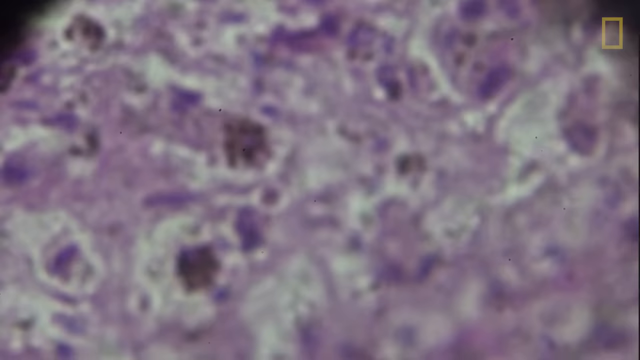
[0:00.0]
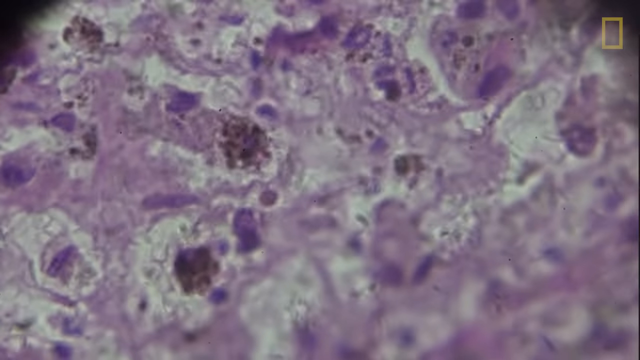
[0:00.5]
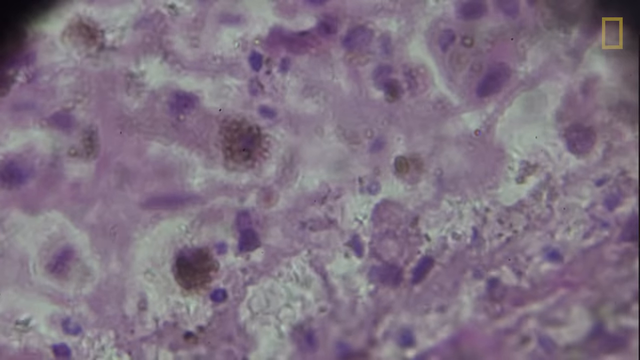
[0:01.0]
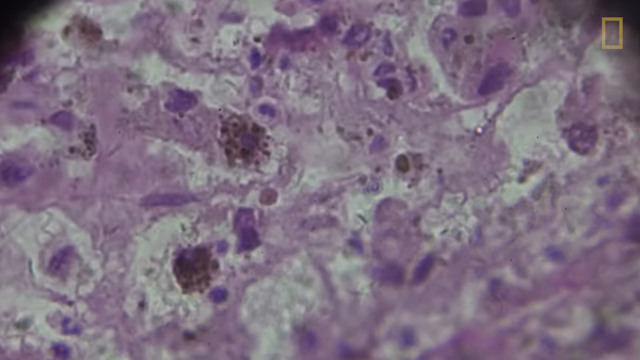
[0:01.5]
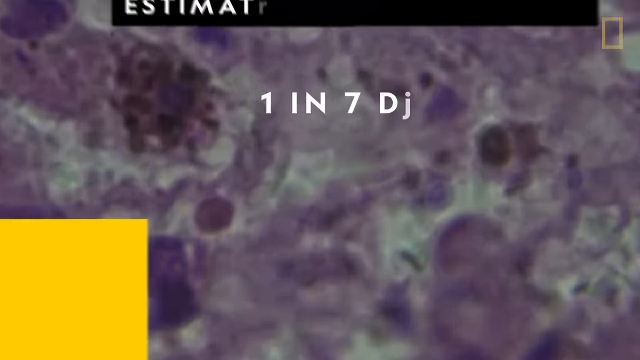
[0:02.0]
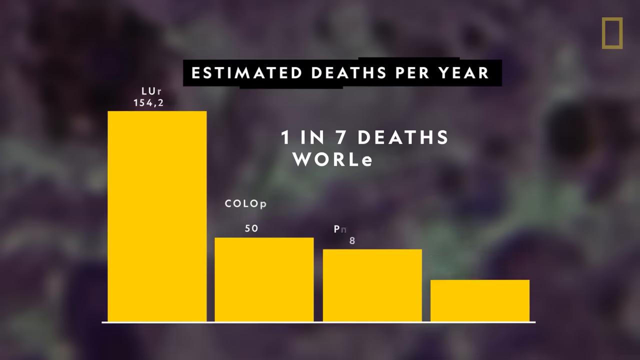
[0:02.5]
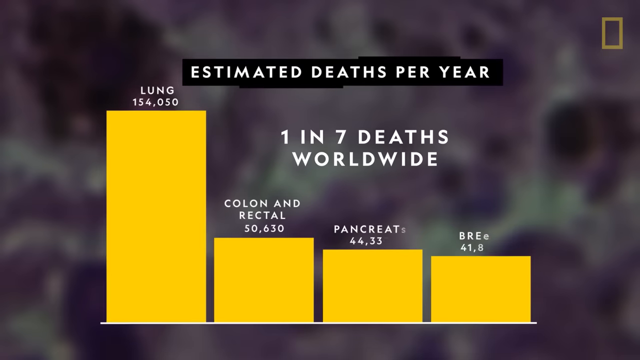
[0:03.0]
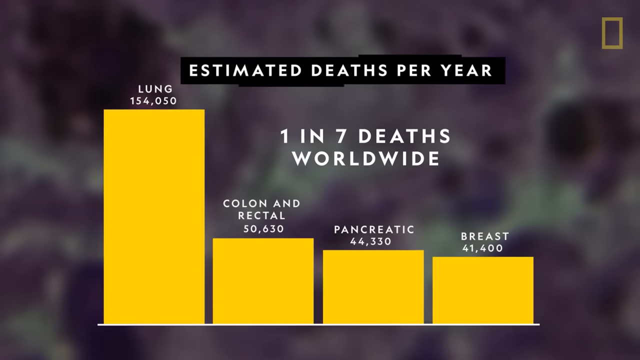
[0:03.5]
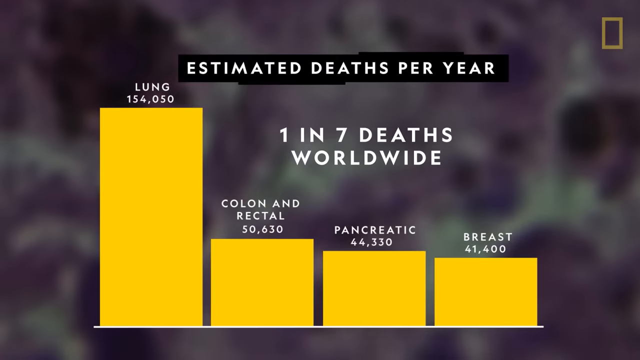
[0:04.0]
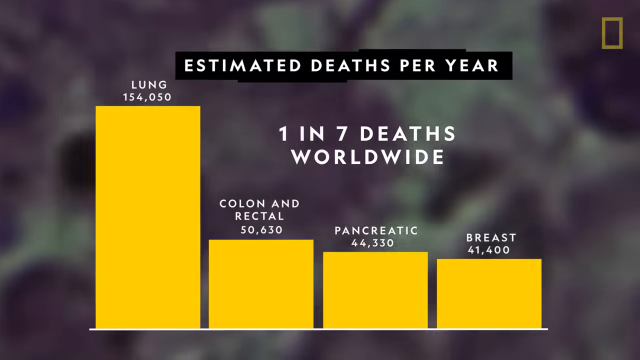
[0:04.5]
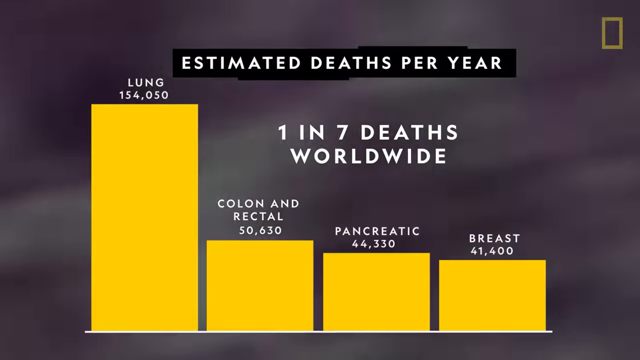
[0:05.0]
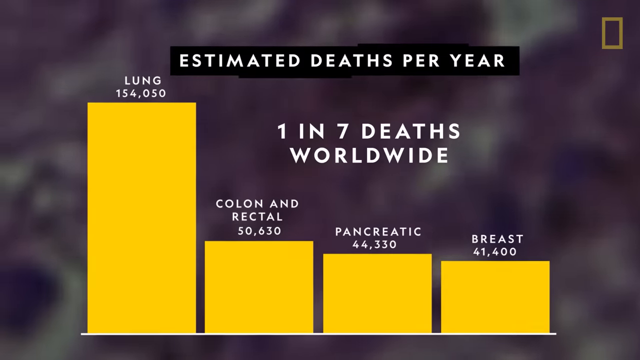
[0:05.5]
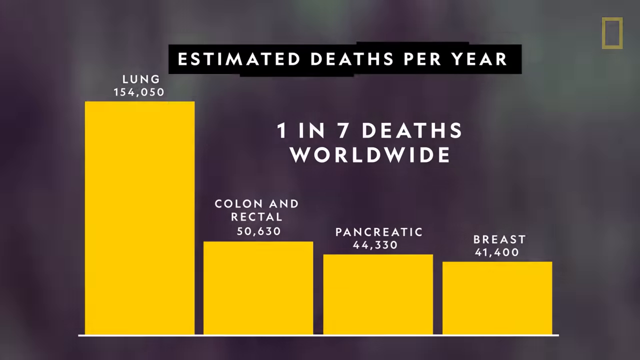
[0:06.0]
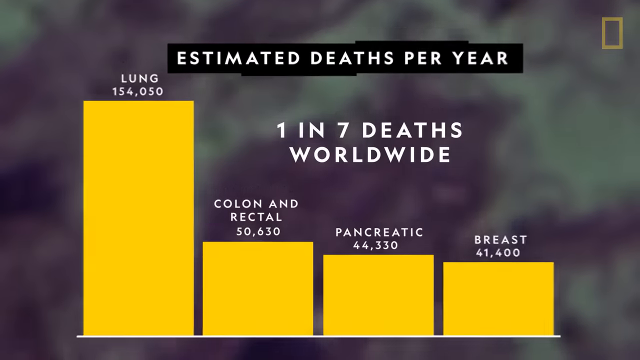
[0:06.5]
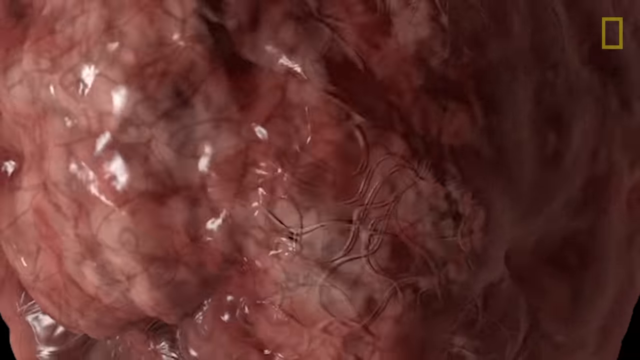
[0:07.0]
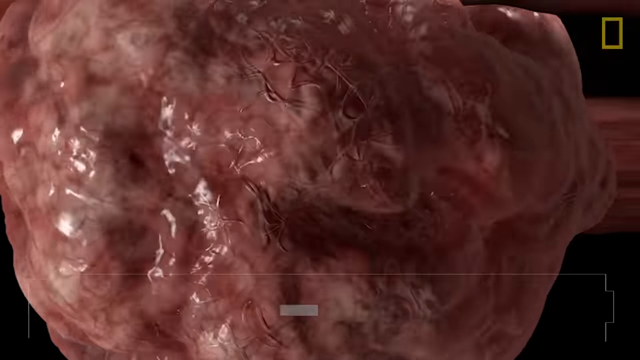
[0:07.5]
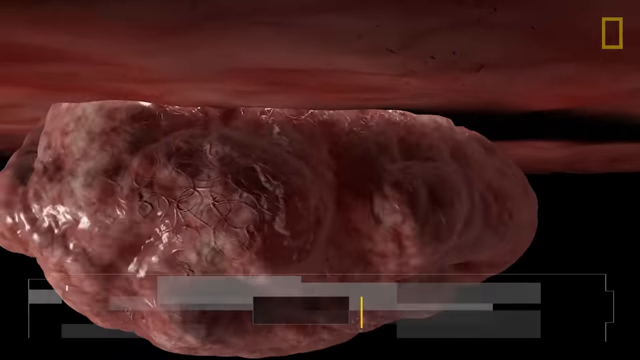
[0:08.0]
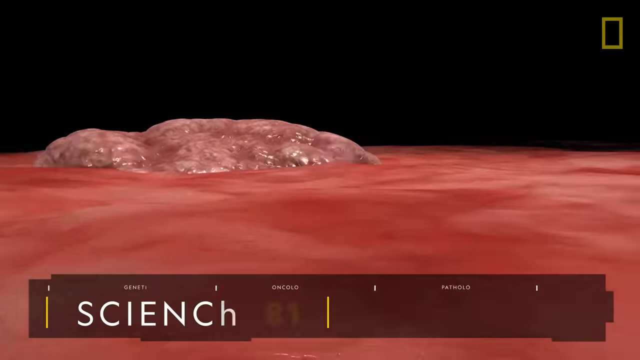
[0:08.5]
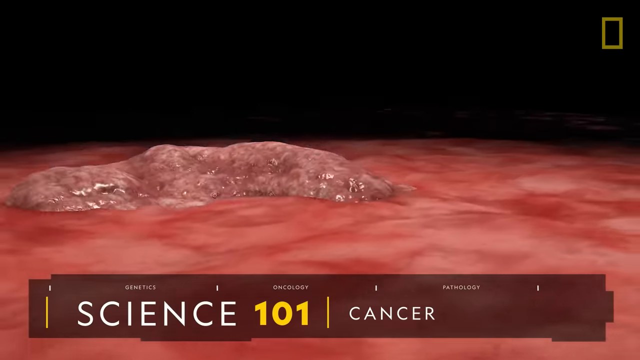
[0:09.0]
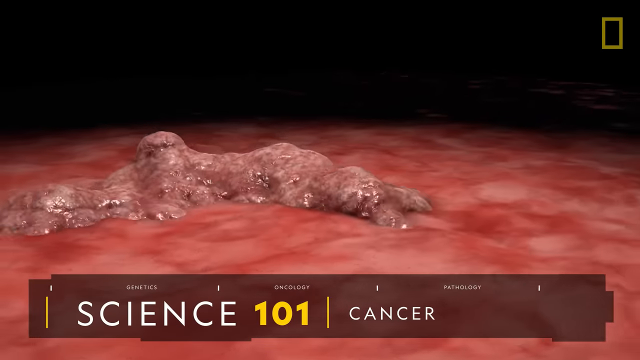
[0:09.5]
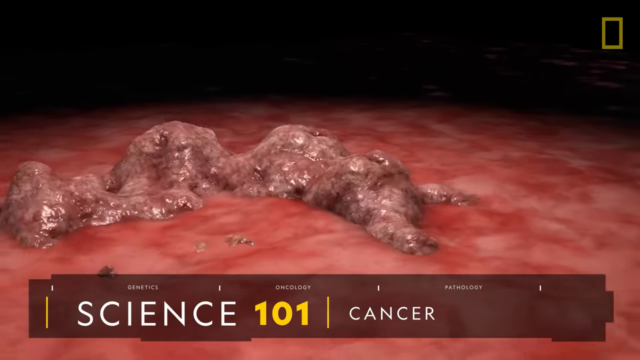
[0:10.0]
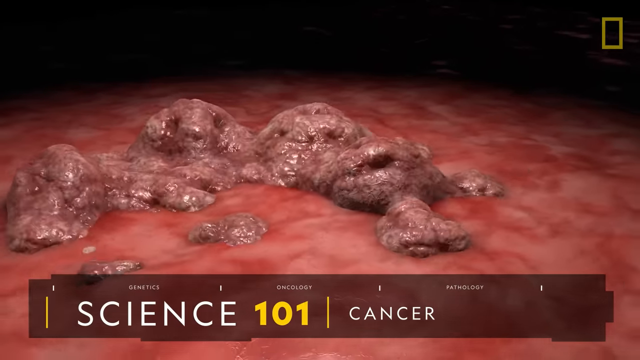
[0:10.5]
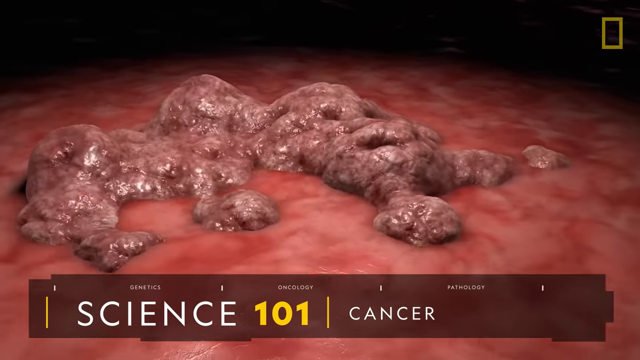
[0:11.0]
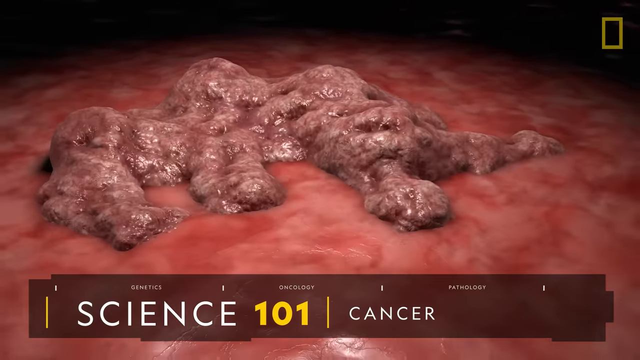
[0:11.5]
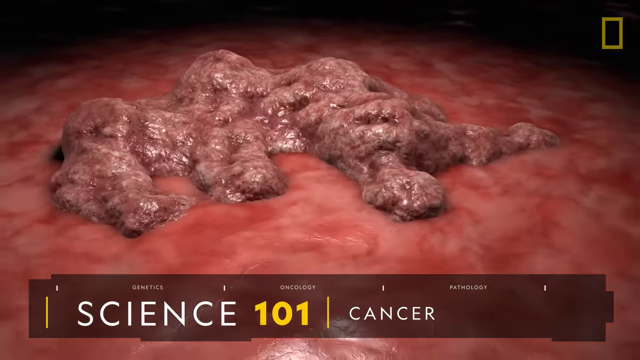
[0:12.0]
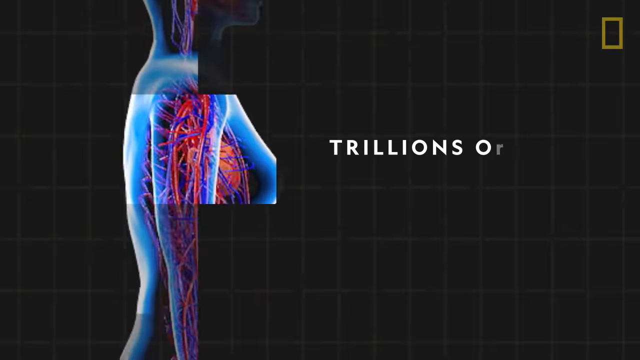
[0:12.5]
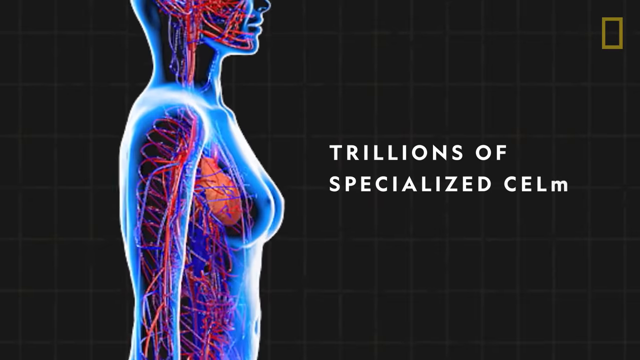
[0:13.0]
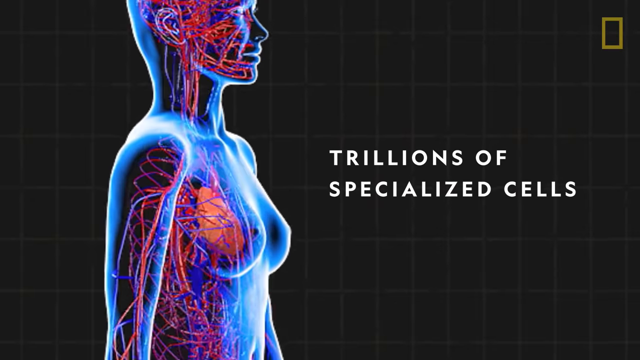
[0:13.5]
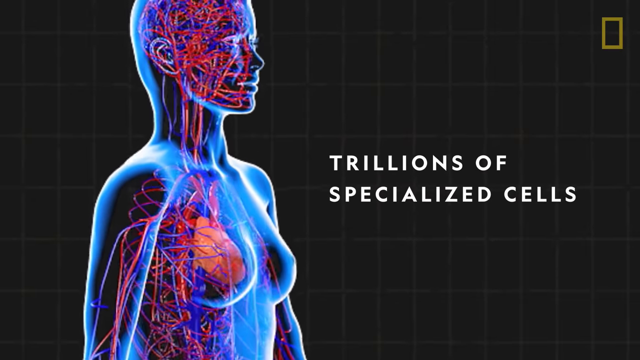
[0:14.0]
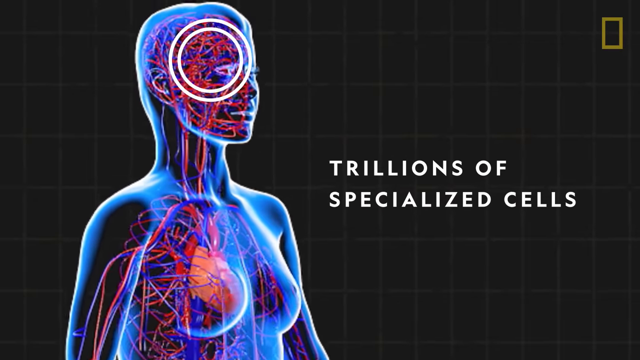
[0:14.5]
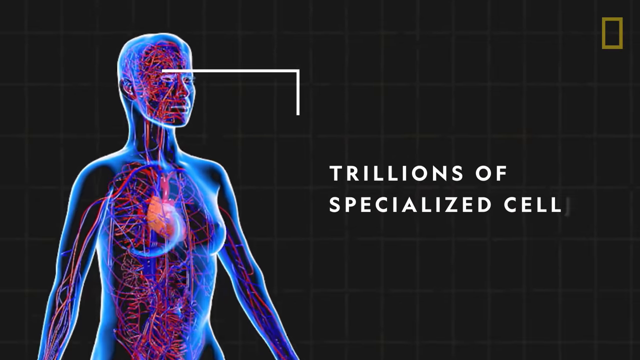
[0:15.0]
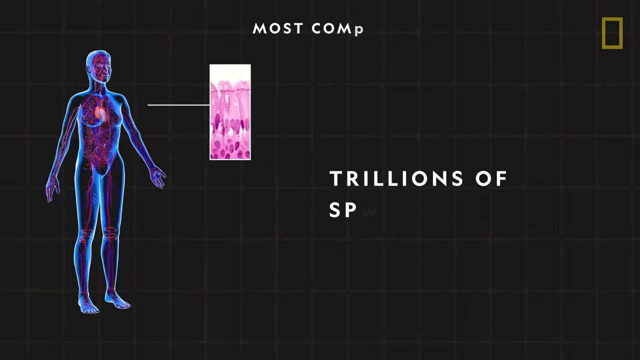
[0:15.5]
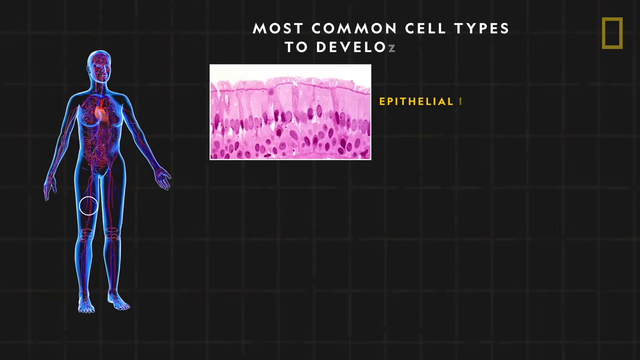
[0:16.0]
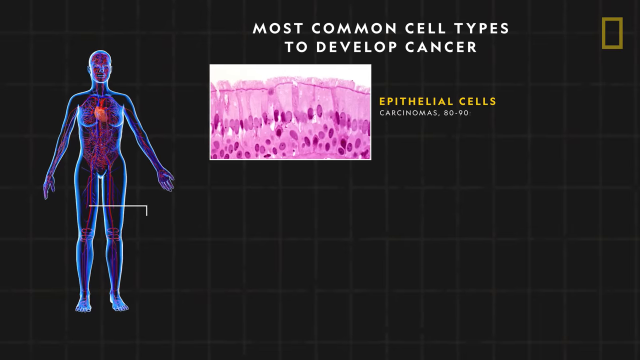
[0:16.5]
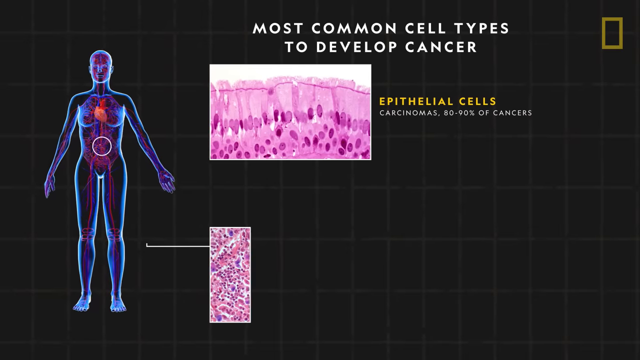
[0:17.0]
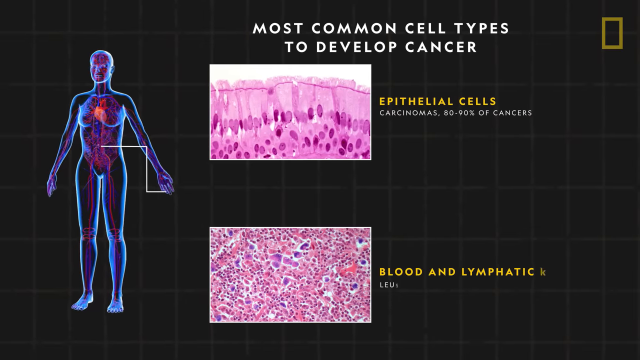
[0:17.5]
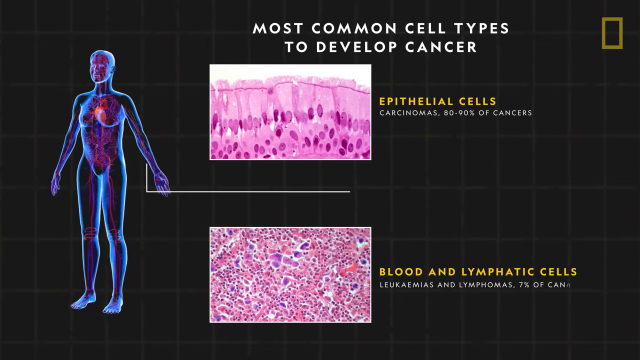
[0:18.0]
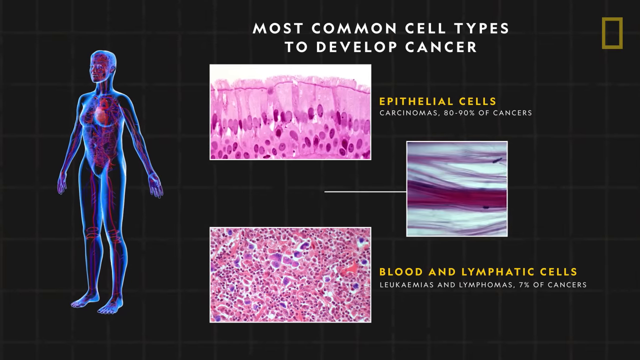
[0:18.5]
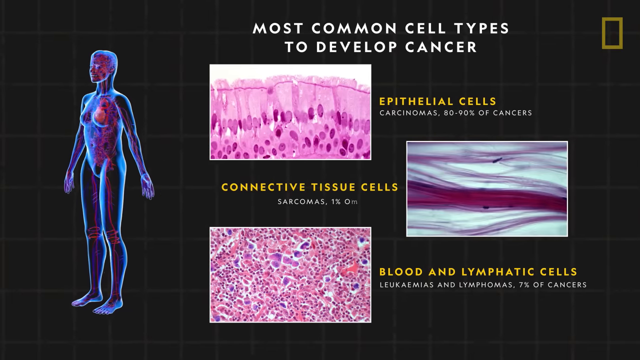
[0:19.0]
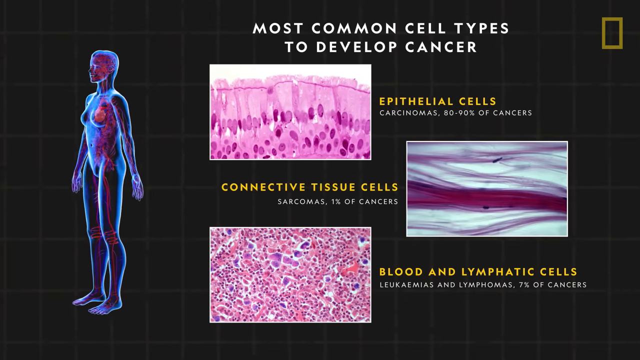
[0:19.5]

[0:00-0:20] The video opens on a blurred image of purple, light purple and white shapes, possibly a cell. That image shifts into the background and a yellow bar chart pops up showing types of deaths worldwide; the categories apparently include lung, colon and rectal, possibly skin, and seem to be types of cancer. The scene then shifts to what looks like a computer-generated image of something growing, maybe a cell, maybe a cancerous growth. Next comes a diagram of a person showing the outline of the body and the internal organs, with a slide title apparently about the most frequent types of cells to get cancer. The images shift quickly.